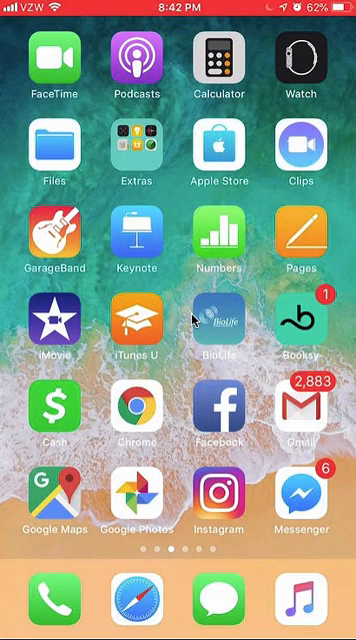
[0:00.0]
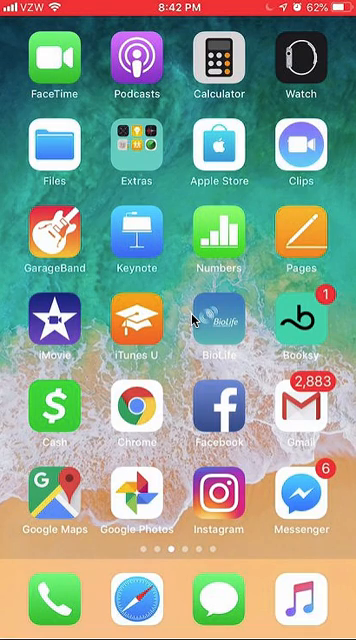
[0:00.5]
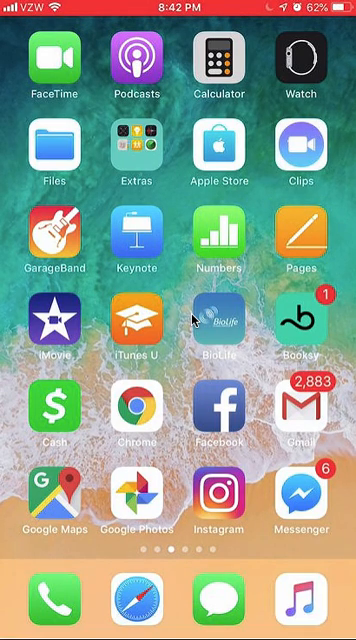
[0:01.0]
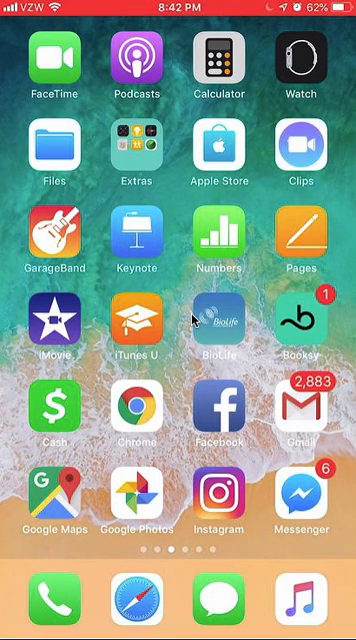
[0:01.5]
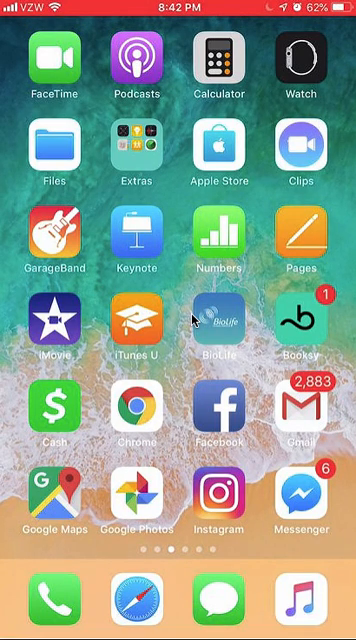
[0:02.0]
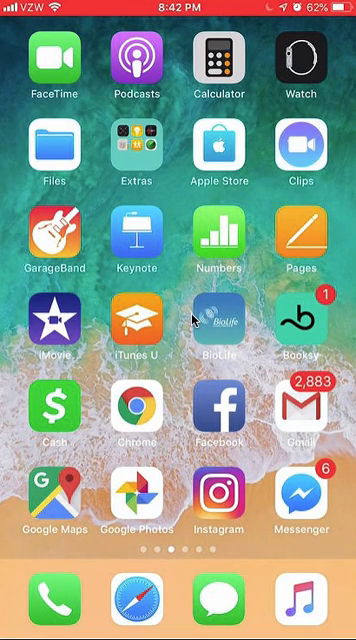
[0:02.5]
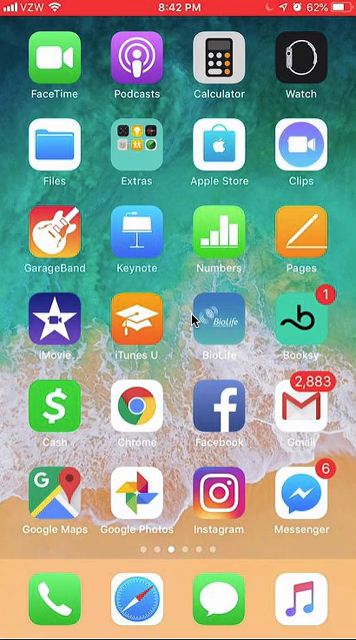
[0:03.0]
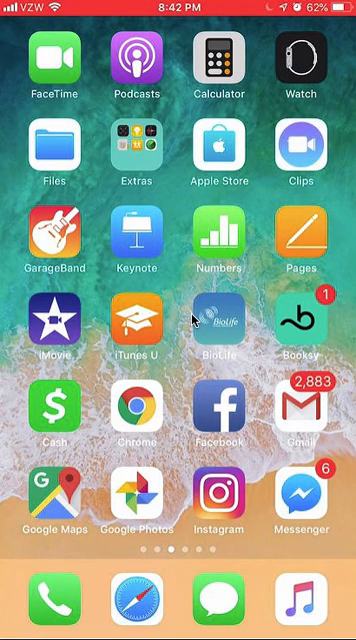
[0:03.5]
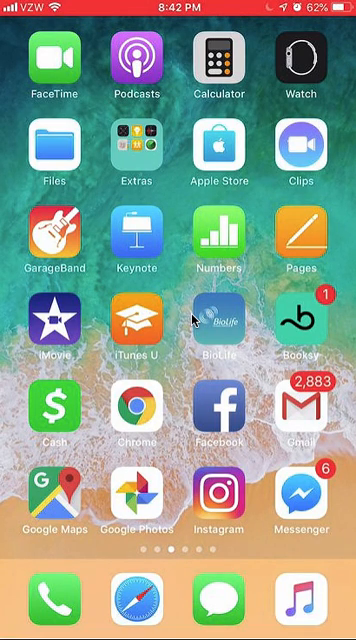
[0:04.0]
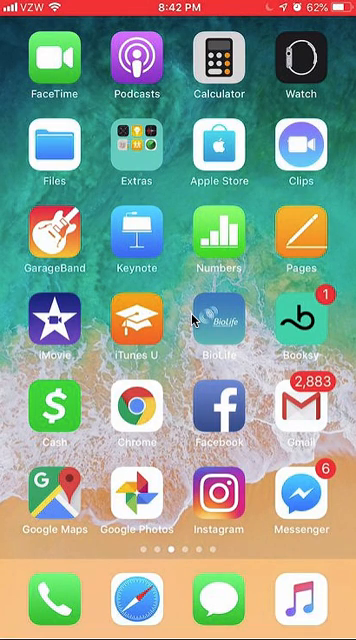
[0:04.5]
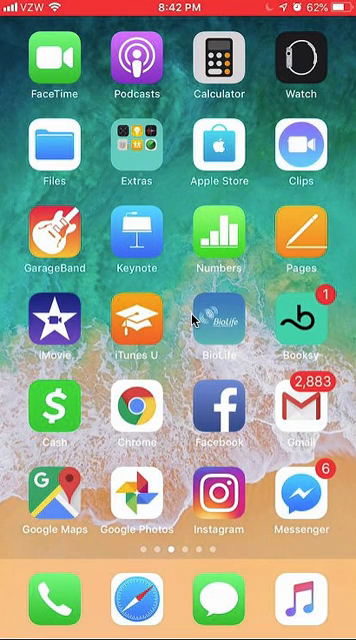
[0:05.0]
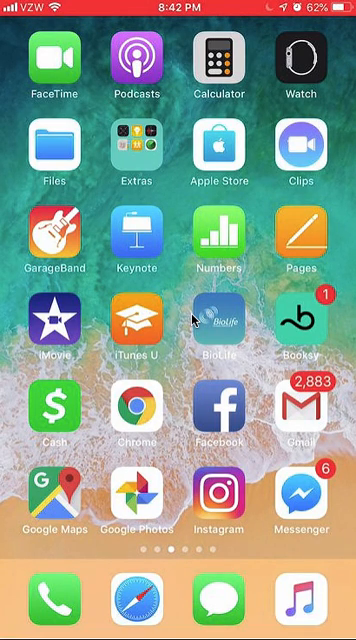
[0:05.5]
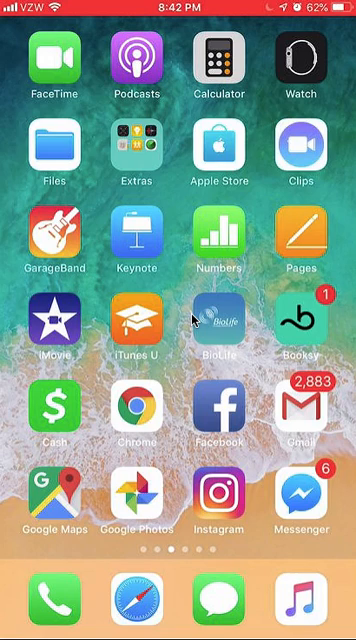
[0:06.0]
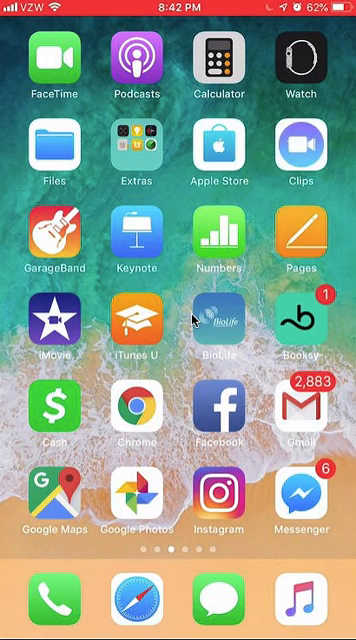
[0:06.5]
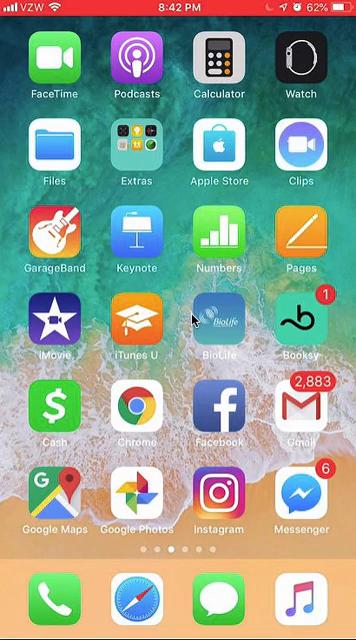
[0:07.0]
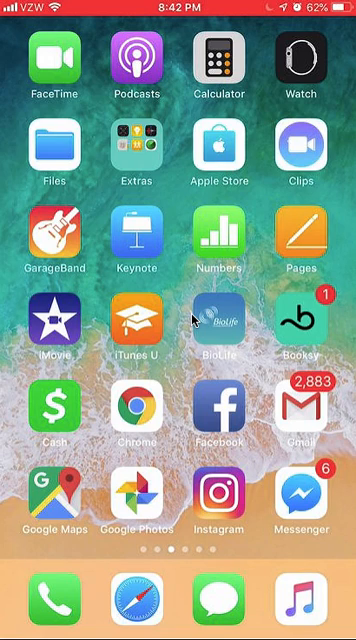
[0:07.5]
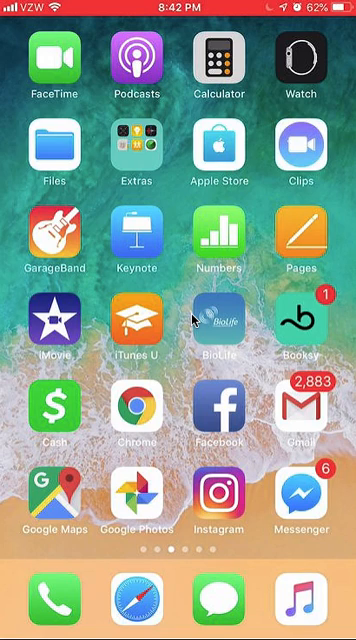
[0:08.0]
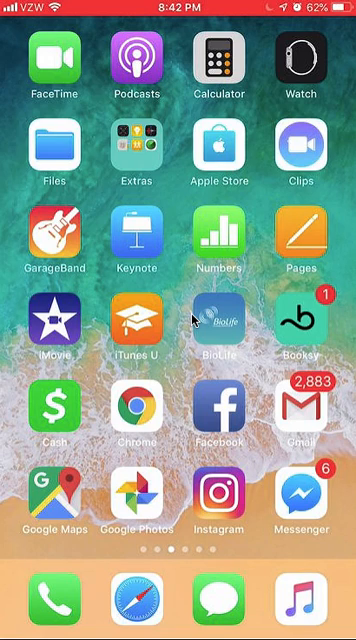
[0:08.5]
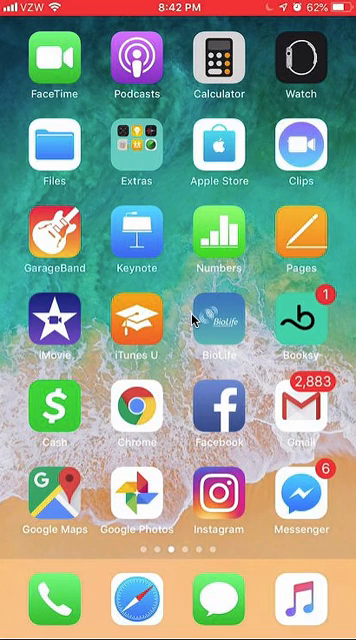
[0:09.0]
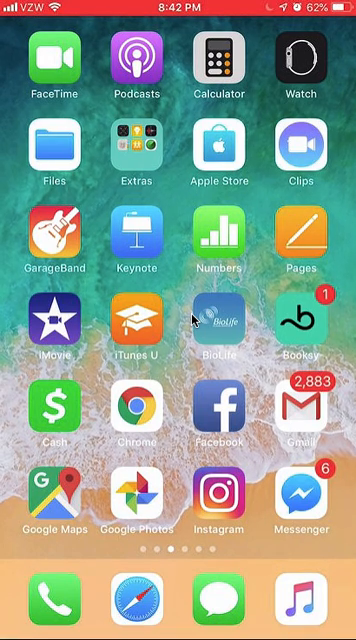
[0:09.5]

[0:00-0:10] The video begins with a screenshot of an iPhone screen, apparently a Verizon model. The display shows the time as 8:42 p.m. and the battery charged at 62%. The home screen shows the available apps, four per row. Starting from the upper left, they include FaceTime, Podcast, Calculator, Watch, Files, Extras, Apple Store, Numbers, Pages, iMovie, iTunes University, Keynote, GarageBand and Clips, plus one app whose label cannot be read. There is a dollar-sign cash icon, apparently Cash App, along with Chrome, Facebook, Gmail, Google Maps, Google Photos, Instagram and Messenger. There appear to be six messages waiting, and Gmail shows 2883 messages. At the bottom are the Phone app, Safari, Chat and Apple Music.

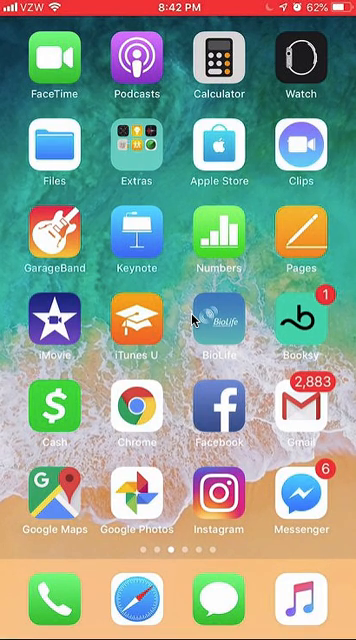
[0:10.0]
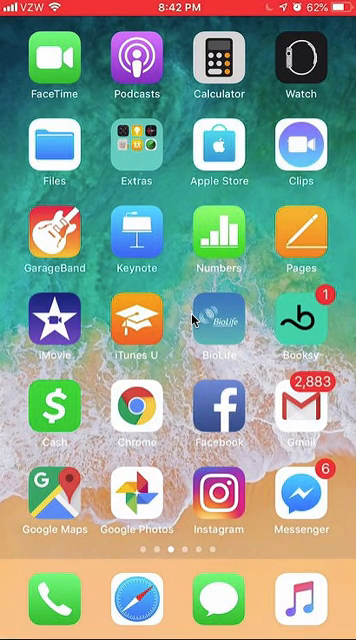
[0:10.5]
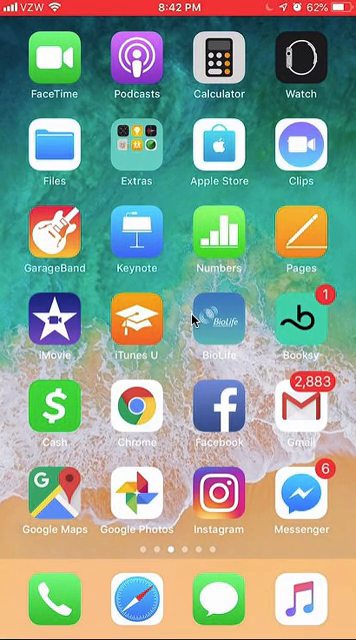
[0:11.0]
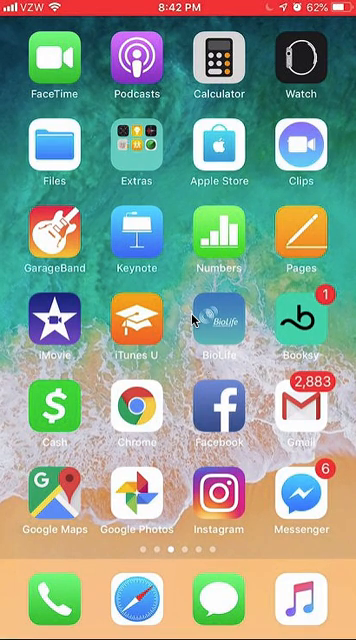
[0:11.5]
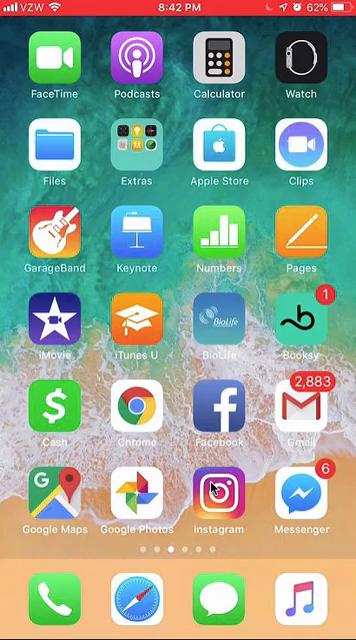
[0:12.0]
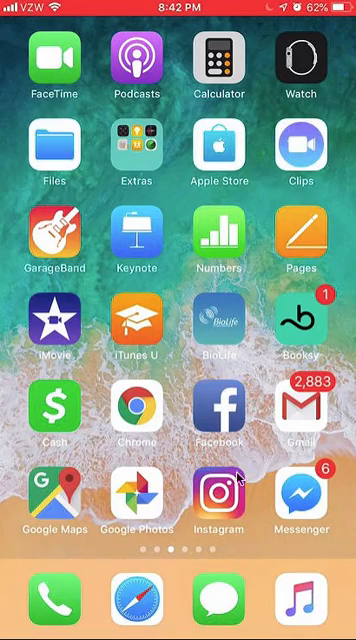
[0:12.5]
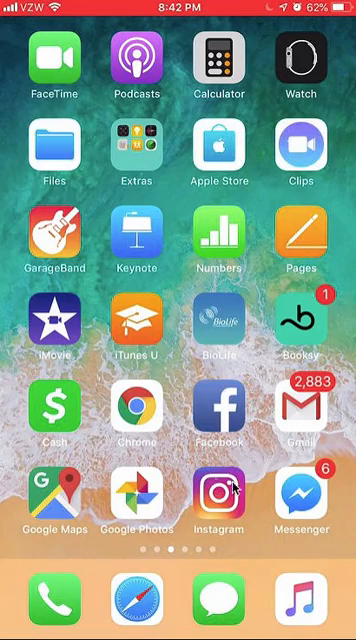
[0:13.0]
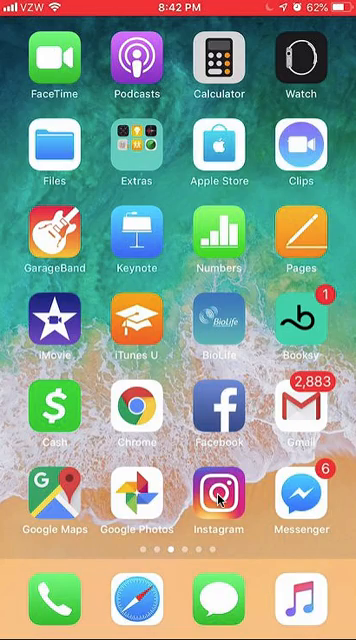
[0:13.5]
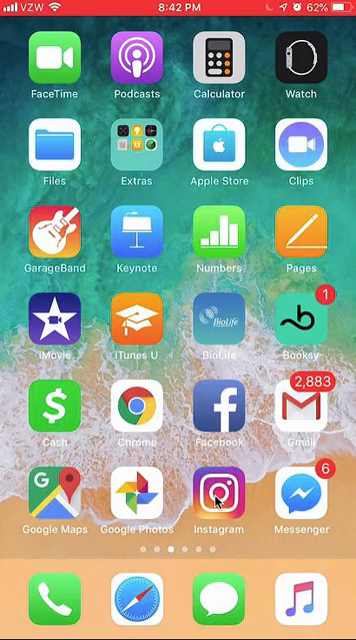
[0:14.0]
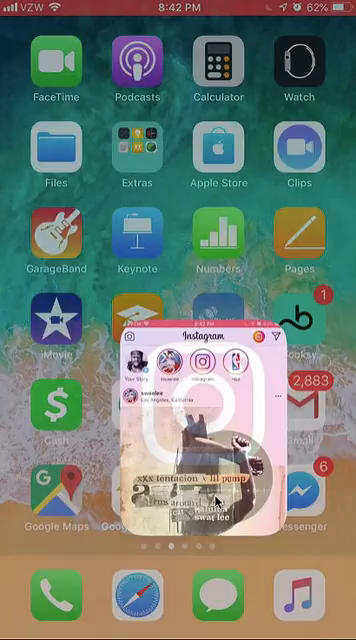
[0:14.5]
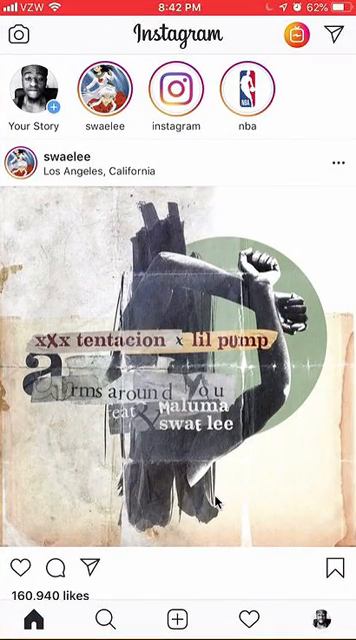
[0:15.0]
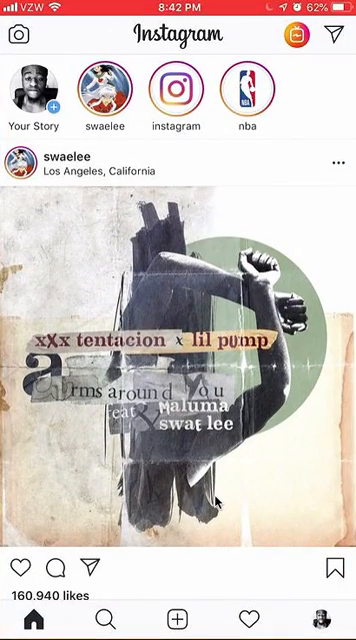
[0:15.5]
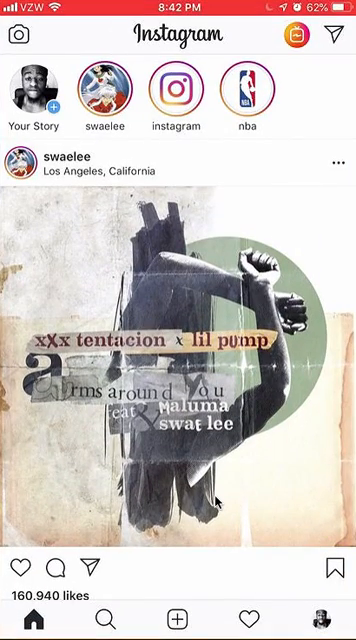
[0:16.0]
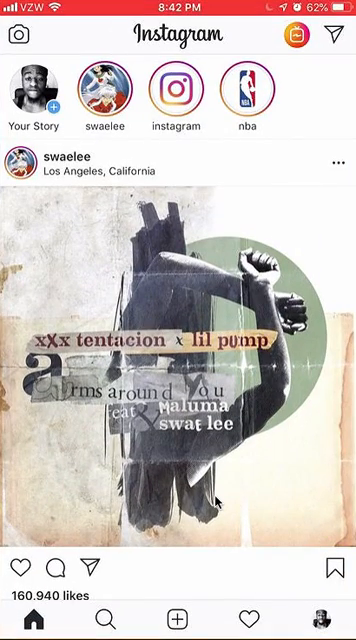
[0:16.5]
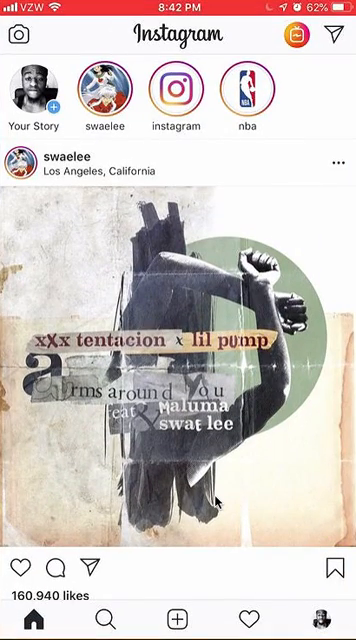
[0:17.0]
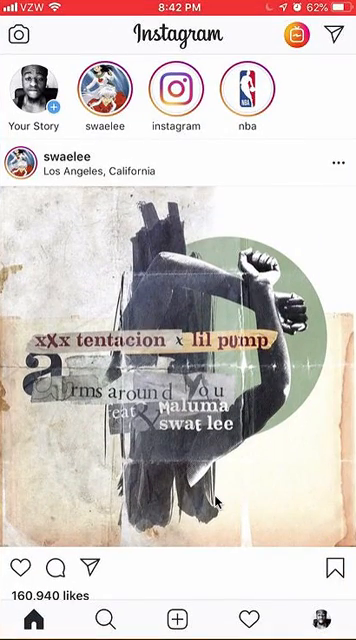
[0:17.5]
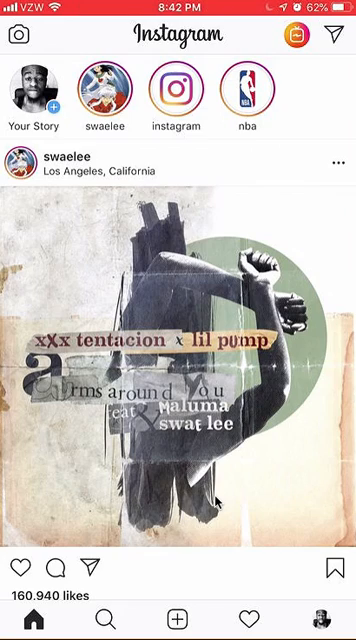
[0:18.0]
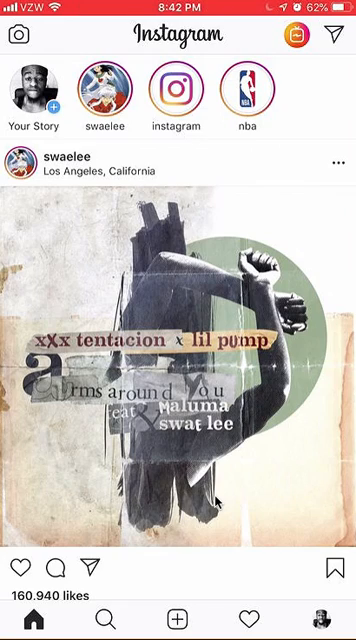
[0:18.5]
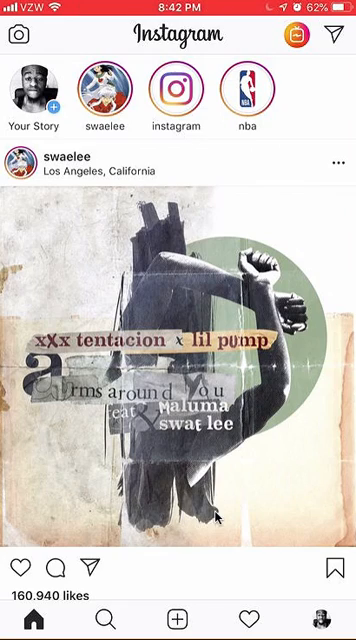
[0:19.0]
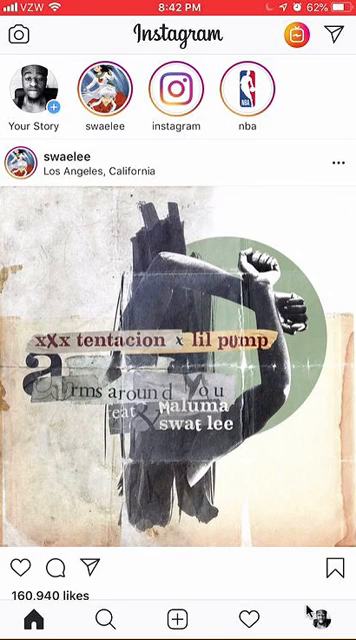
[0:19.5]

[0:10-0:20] On the iPhone screen, the mouse cursor moves around the Instagram icon, circles it a few times, and clicks. Instagram opens to the home page. Along the top are several icons: a camera icon in the upper left corner, the Instagram logo in the top middle, another unidentified icon, and a paper airplane icon for sending. Below is a post by Sway Lee, from Los Angeles, California. It looks like some type of artwork involving XXXTentacion and Lil Pump. The abstract art shows two arms crossing each other, balled into fists, which may belong to the same person, with a green circle as a background, somewhat in a watercolor format. "XXXTentacion" is in brown lettering with a tan pastel background. The arms and fists appear to come from an abstract, nondescript, vertical gray brushstroke that is somewhat rectangular. The post appears to have 160,940 likes.